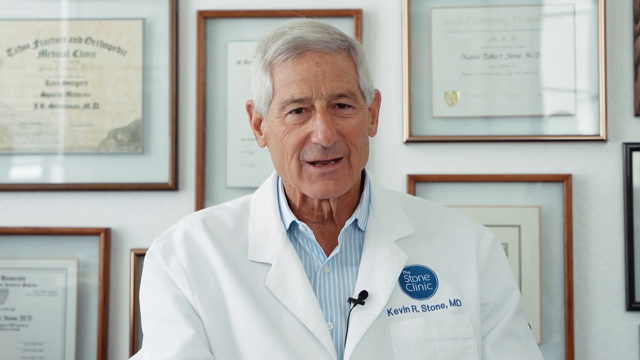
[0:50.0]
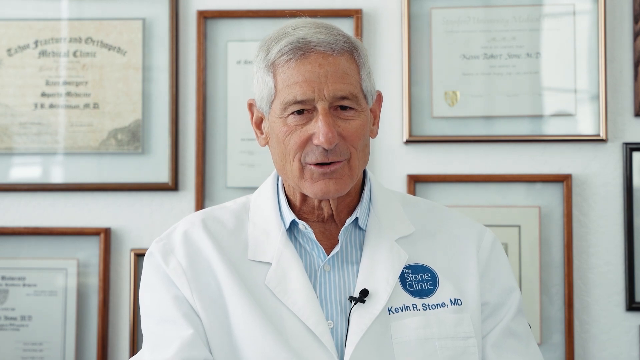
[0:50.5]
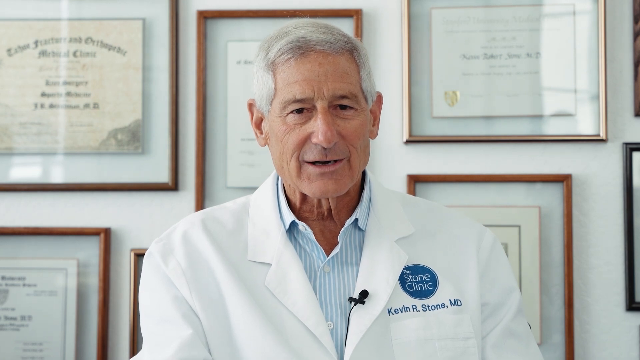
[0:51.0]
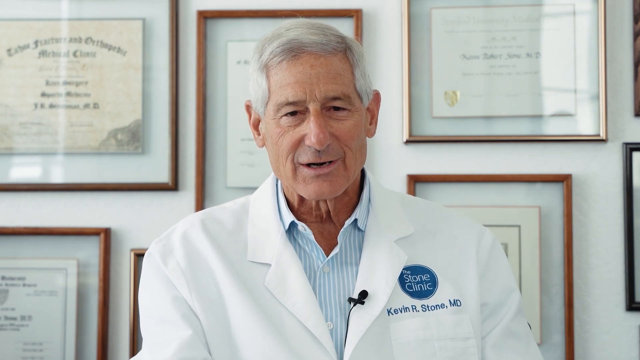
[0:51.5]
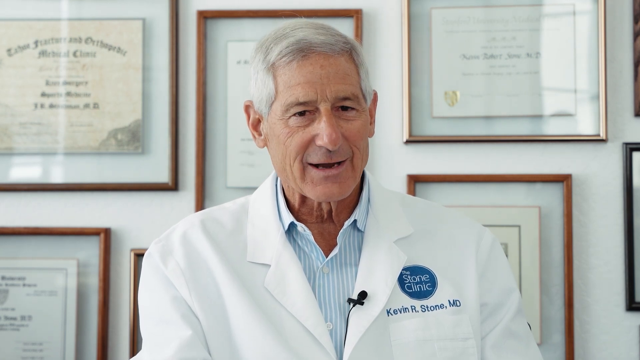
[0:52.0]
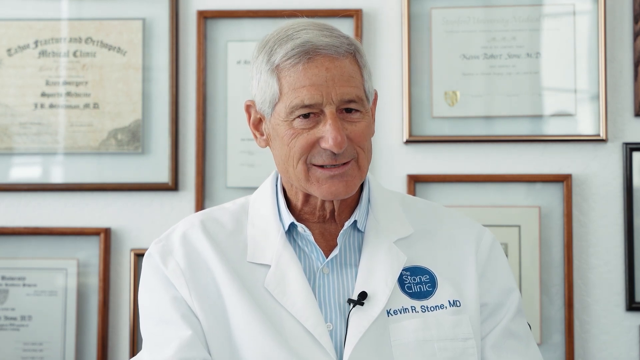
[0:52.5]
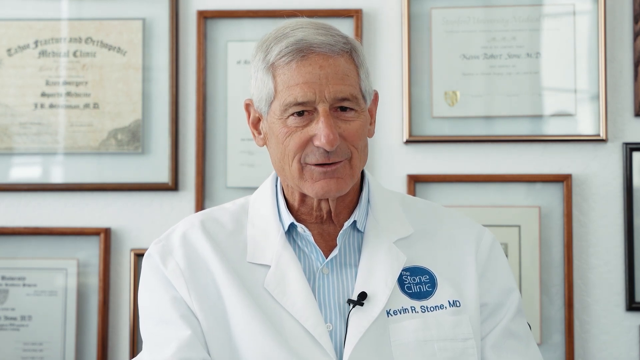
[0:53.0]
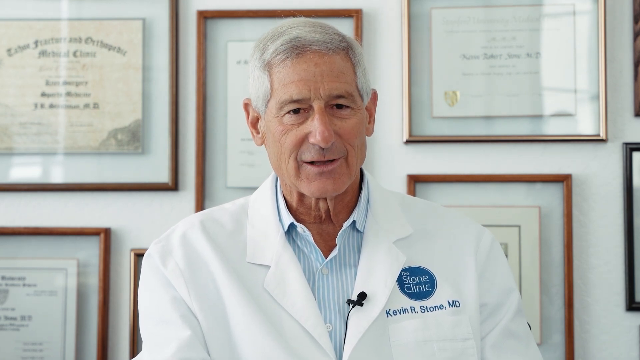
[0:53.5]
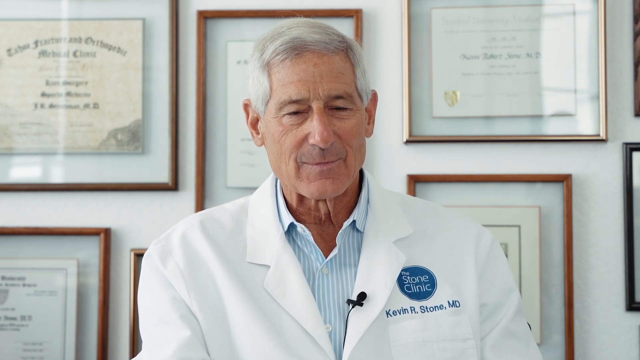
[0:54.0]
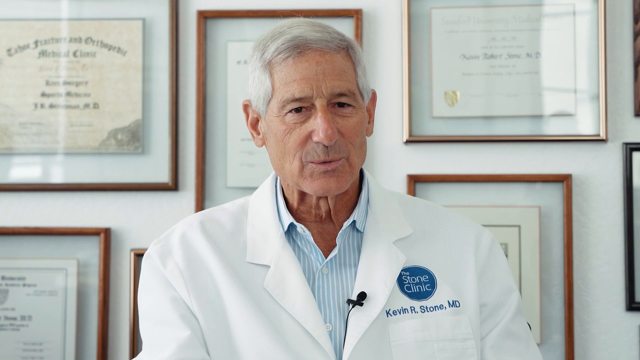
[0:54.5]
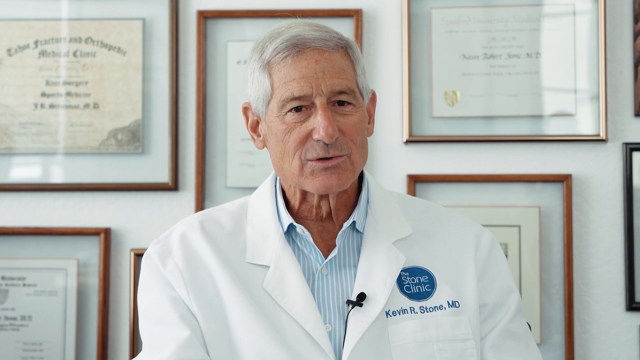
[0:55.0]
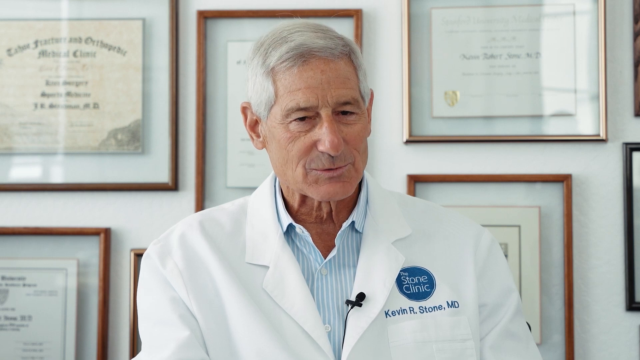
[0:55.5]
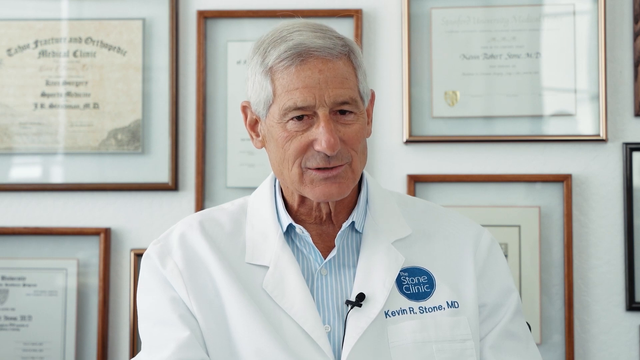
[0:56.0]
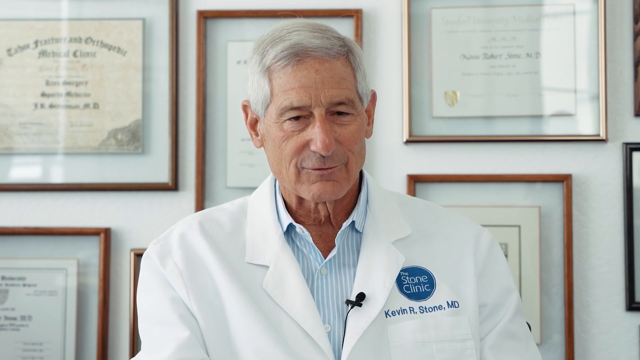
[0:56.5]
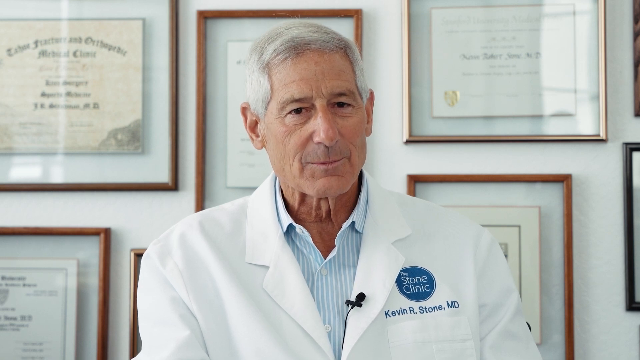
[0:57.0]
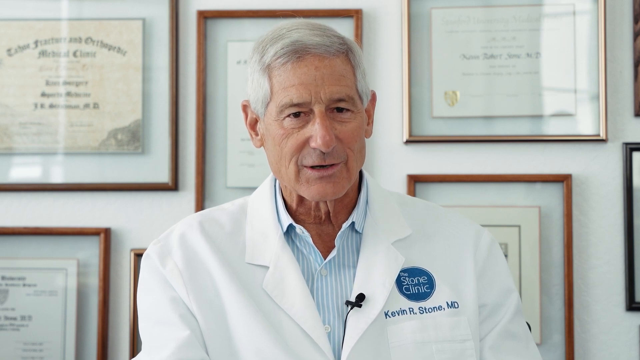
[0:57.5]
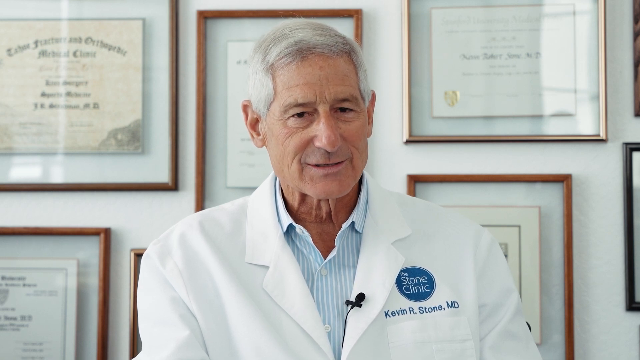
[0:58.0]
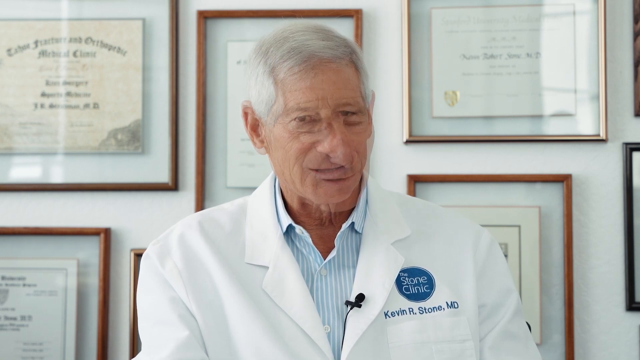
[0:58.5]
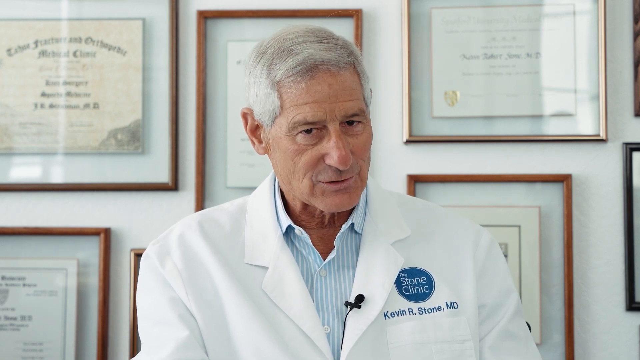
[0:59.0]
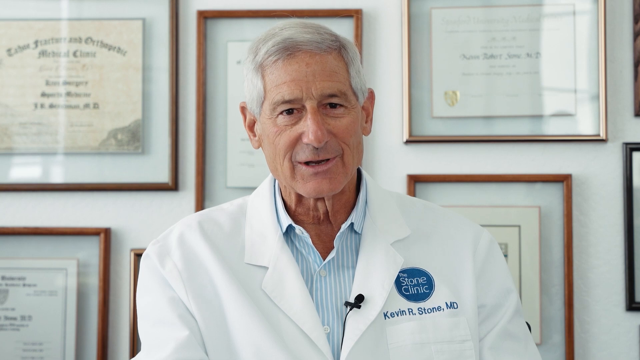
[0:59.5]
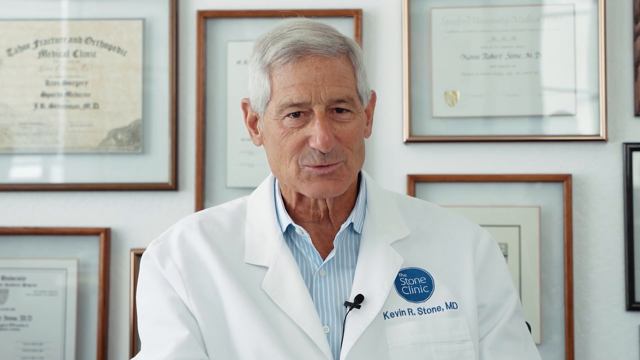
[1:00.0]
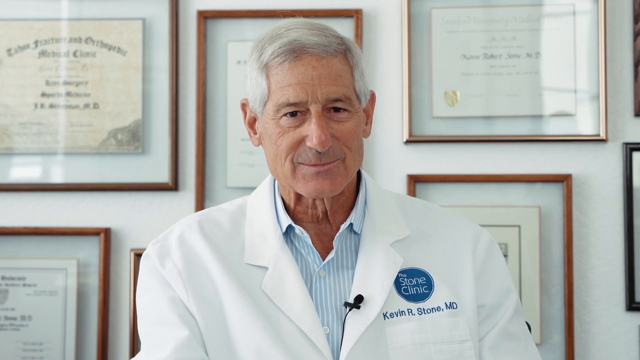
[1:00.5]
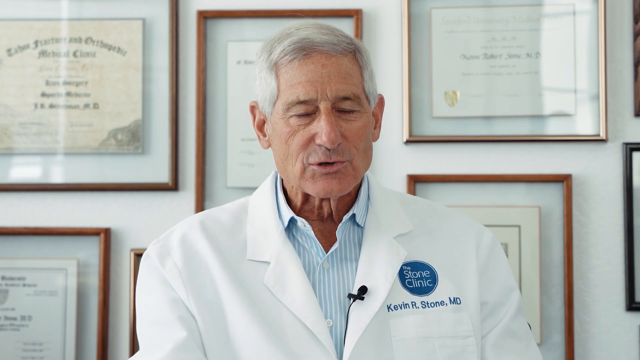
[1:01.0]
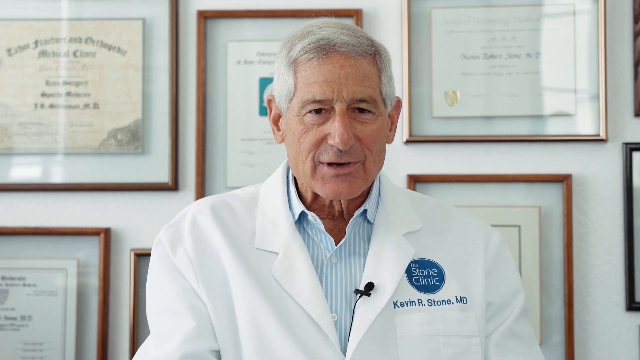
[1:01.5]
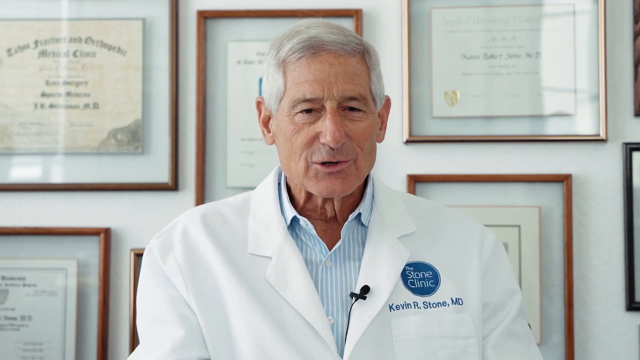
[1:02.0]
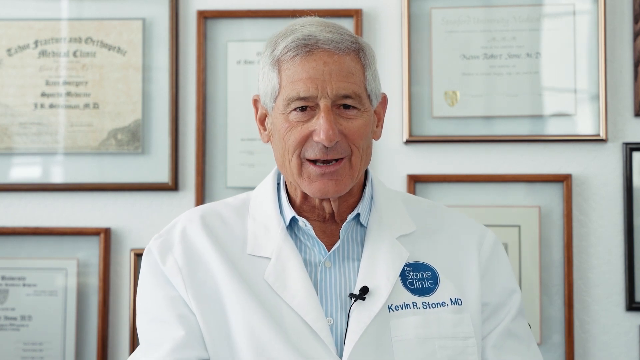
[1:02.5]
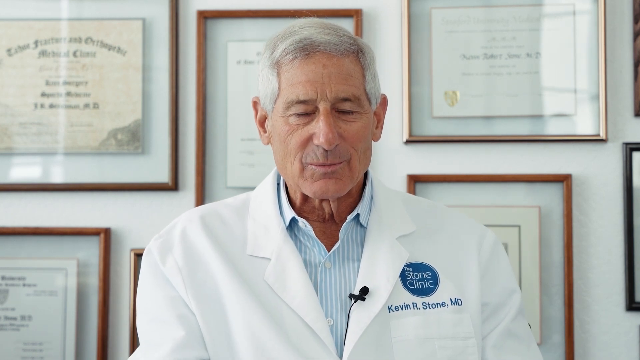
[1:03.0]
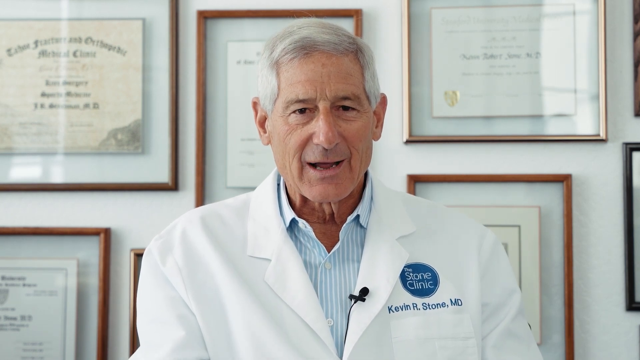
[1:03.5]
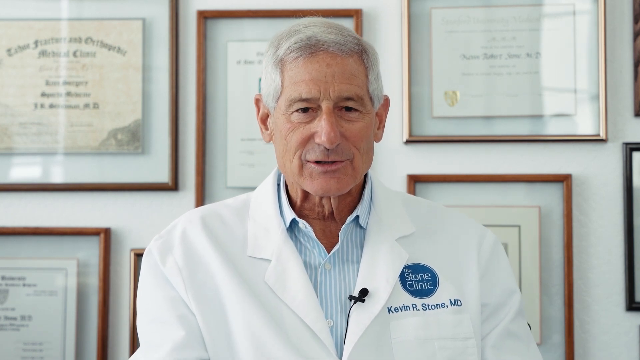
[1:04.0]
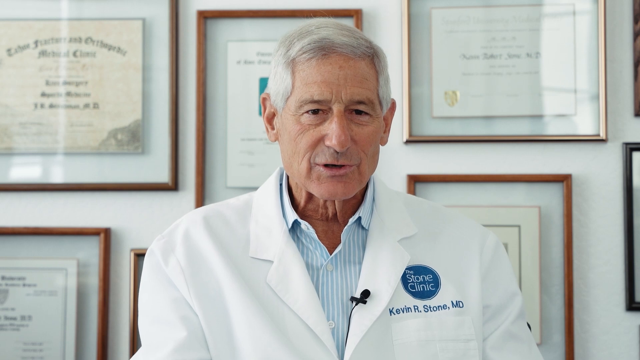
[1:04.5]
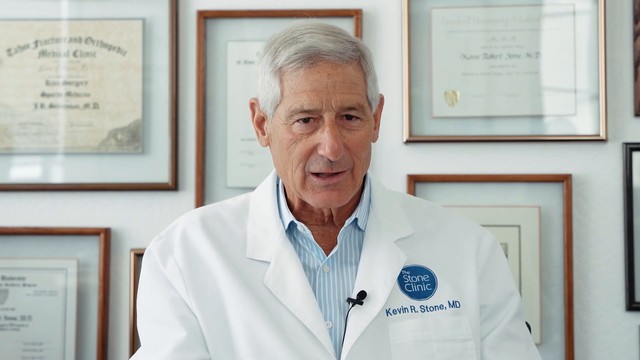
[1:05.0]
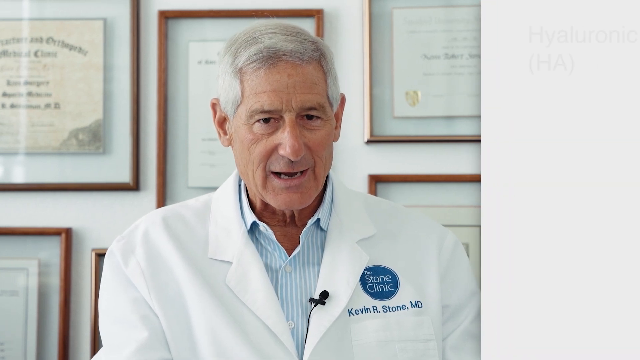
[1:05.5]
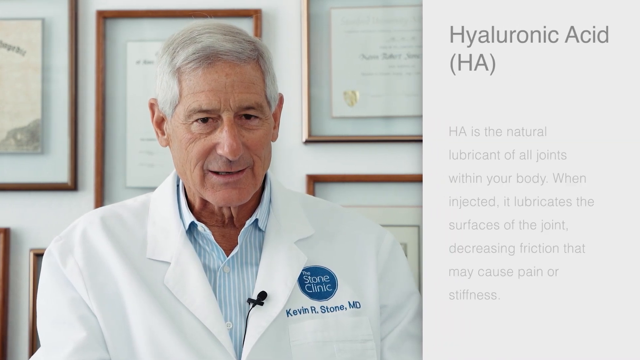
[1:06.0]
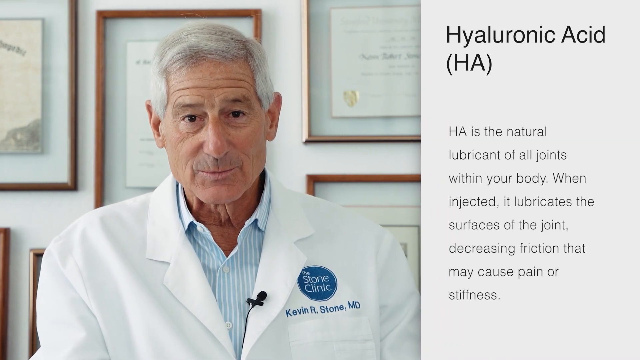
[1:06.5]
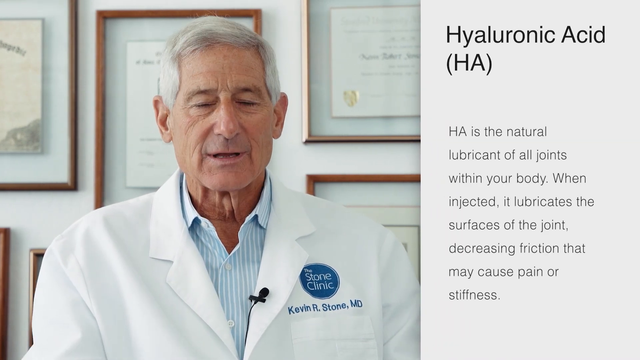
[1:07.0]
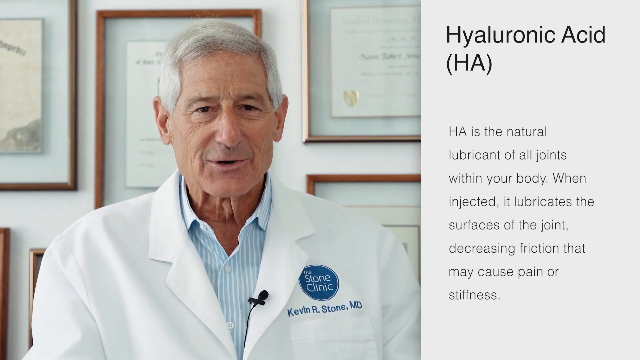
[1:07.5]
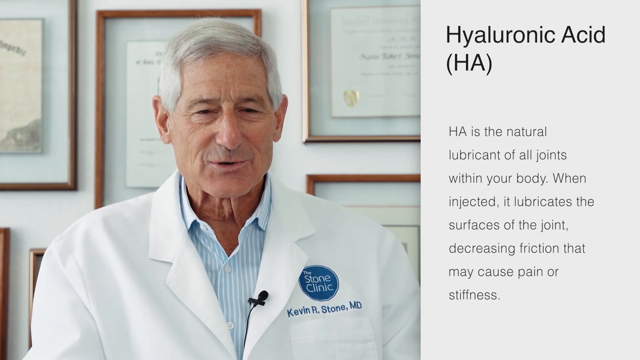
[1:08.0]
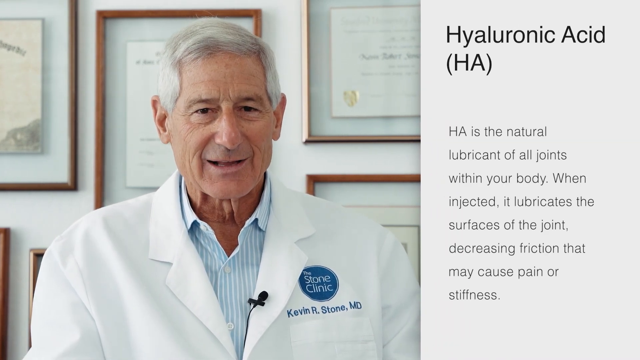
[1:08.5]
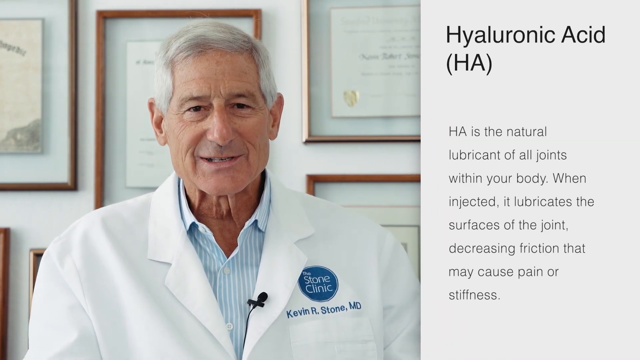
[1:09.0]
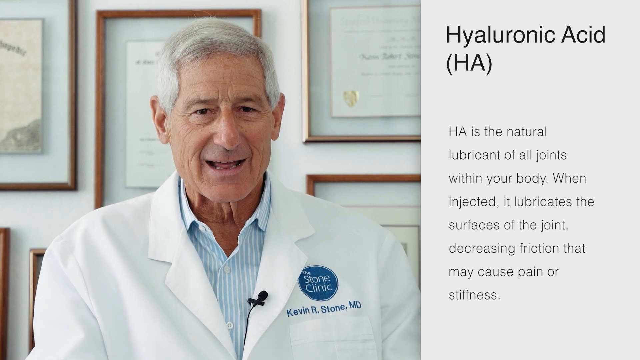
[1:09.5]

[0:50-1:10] Dr. Stone is still being interviewed, speaking to somebody while facing the camera. The screen then changes, and text about hyaluronic acid appears on the right side, reading "hyaluronic acid, also known as HA, is the natural lubricant of all our joints within the body. And when injected, it lubricates the surfaces of the joint".